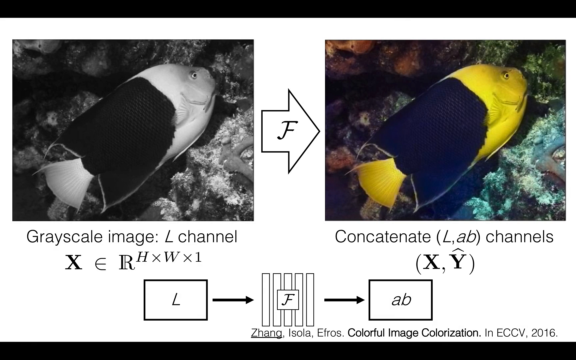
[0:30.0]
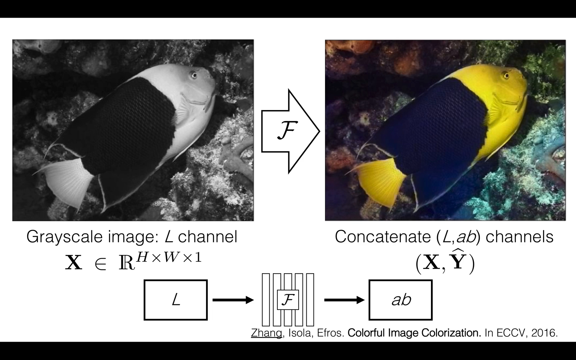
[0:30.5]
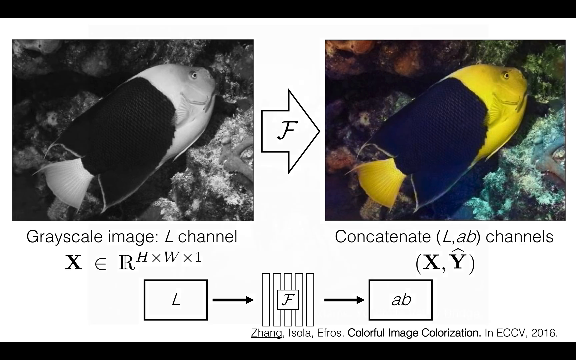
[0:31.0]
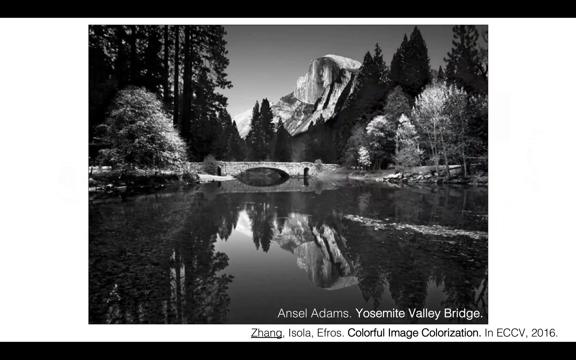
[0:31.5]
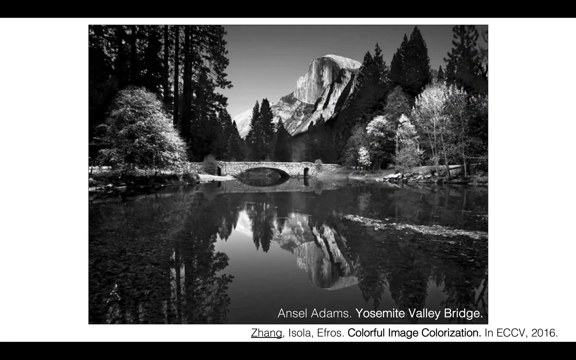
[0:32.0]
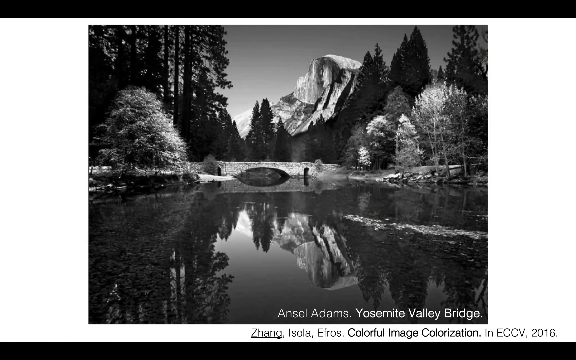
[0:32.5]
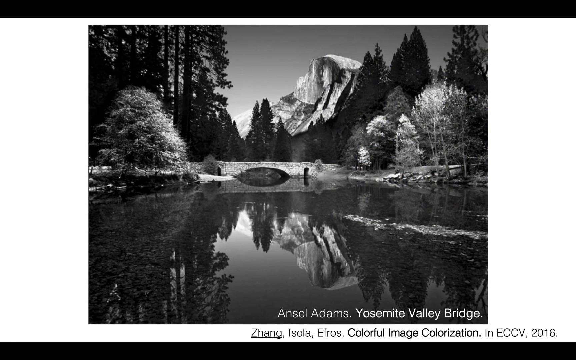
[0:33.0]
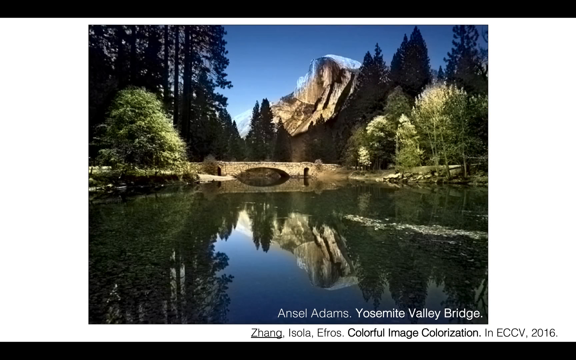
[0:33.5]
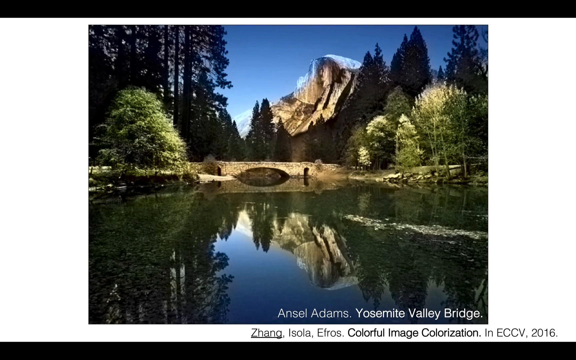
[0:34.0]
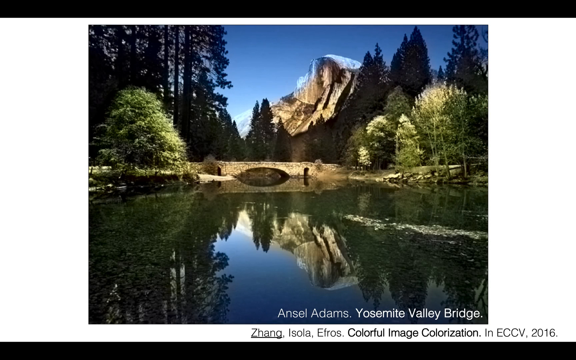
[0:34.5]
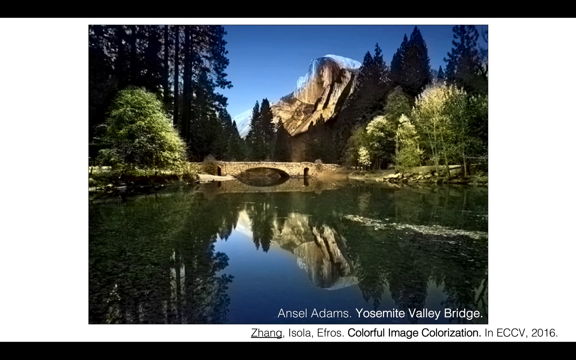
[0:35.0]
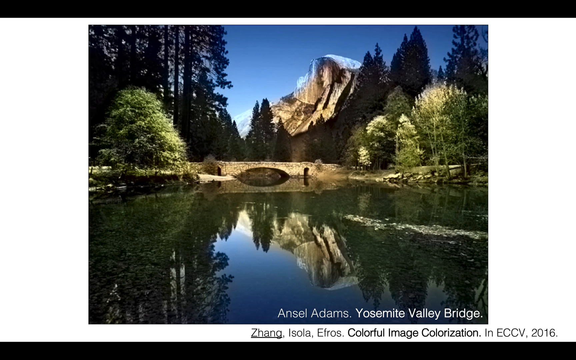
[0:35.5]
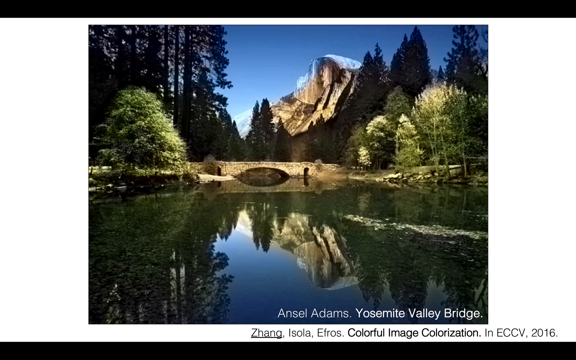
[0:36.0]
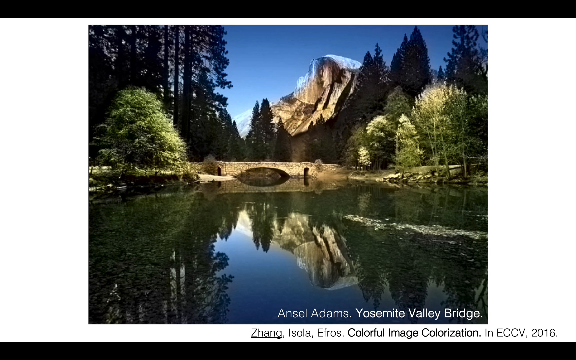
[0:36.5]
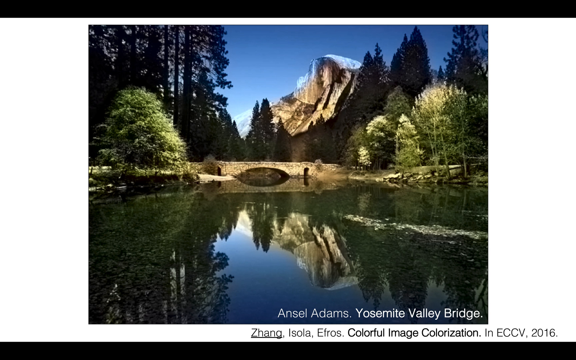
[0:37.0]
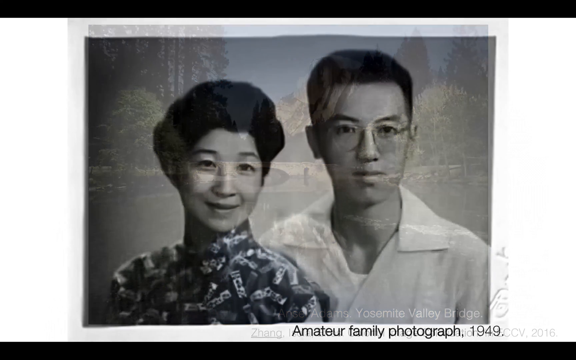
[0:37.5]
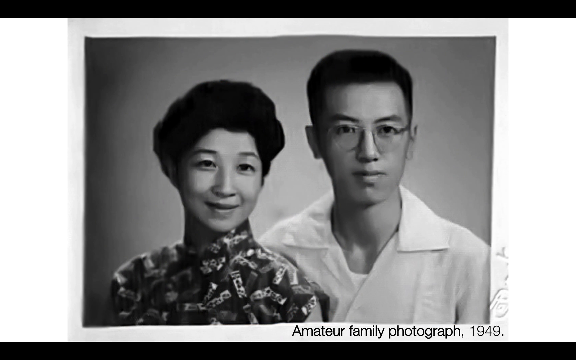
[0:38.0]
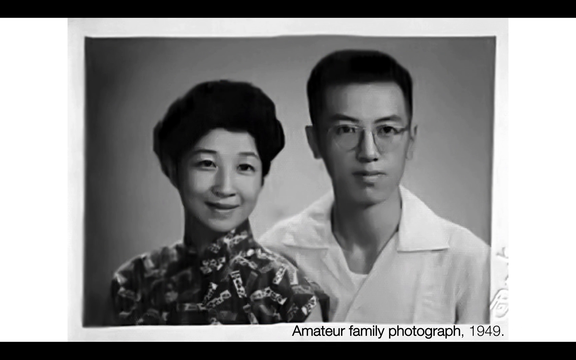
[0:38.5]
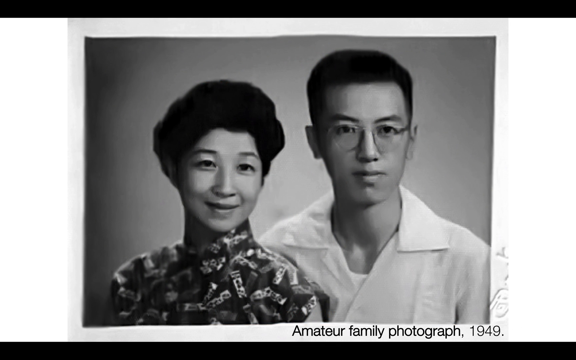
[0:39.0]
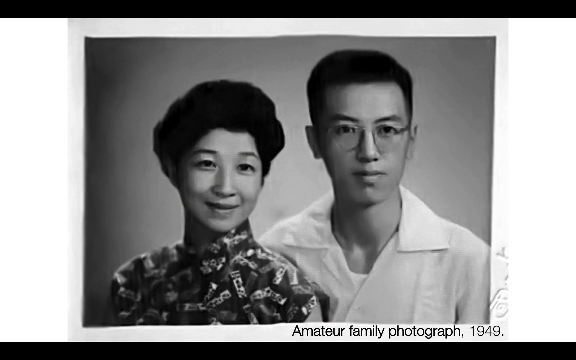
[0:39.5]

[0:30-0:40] On the left, in a square box, is the black-and-white fish image, and in a square box on the right is the same fish, now with a yellow tail fin, a yellow head area and black on its side. The scene then changes to a large square image with the text "Ansel Adams, Yosemite Valley Bridge" at its bottom right. It is a nature scene with mountains in the background and dark trees; closer to the camera, a large body of water reflects the large trees, and there is a bridge in the middle. The whole image is in black and white. The image then changes to color, with a lot of green on the trees, a very bright blue sky, and a more brownish bridge and mountain in the background.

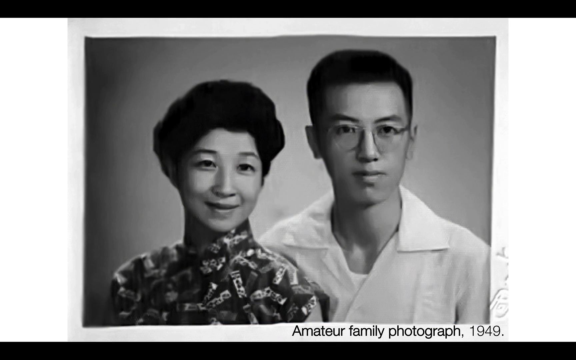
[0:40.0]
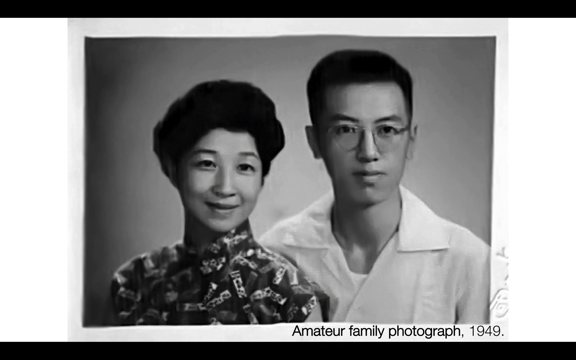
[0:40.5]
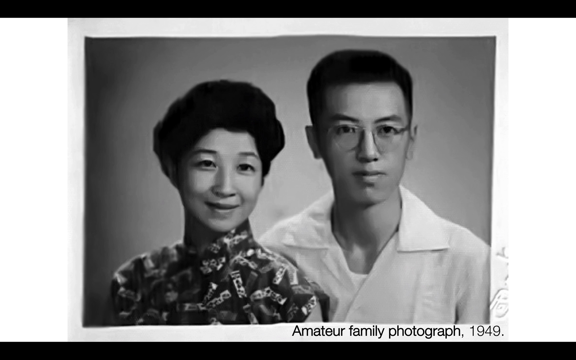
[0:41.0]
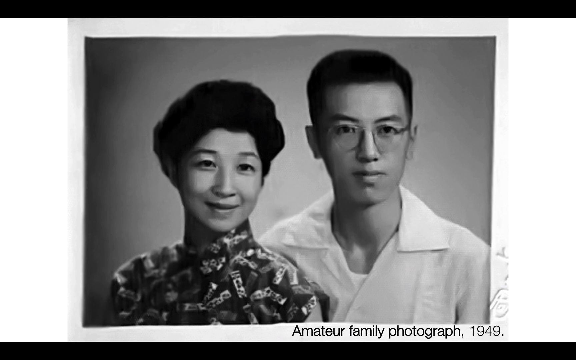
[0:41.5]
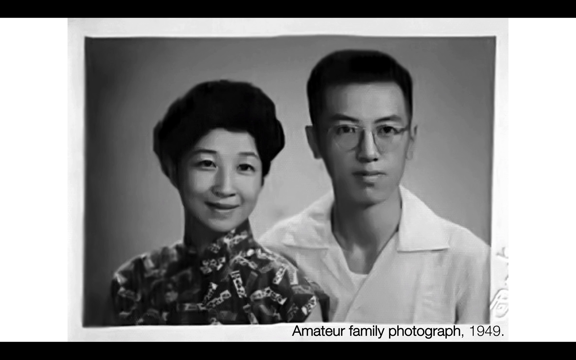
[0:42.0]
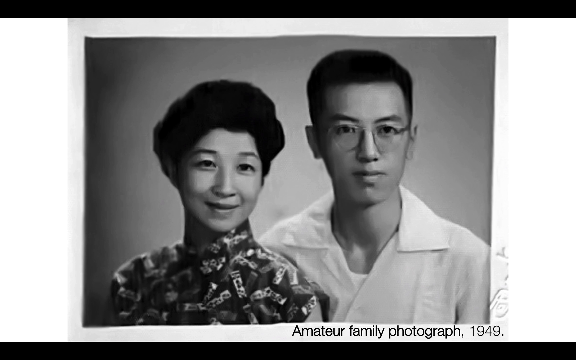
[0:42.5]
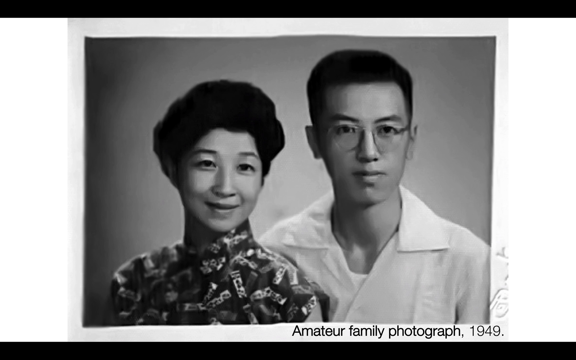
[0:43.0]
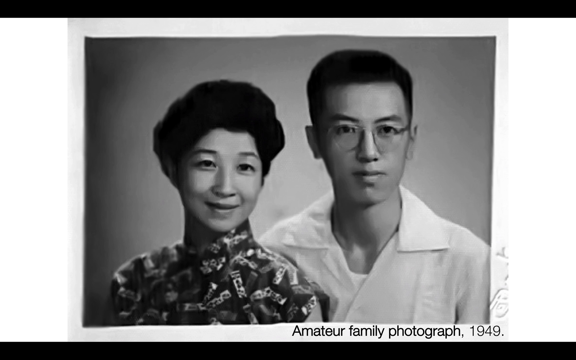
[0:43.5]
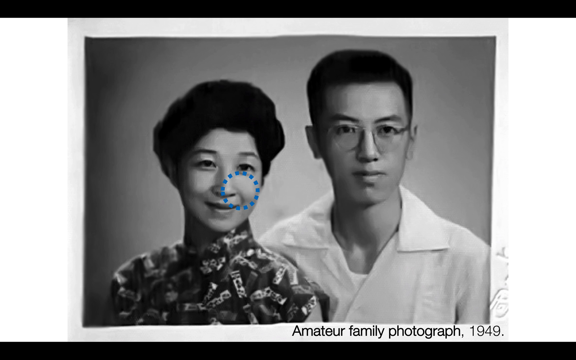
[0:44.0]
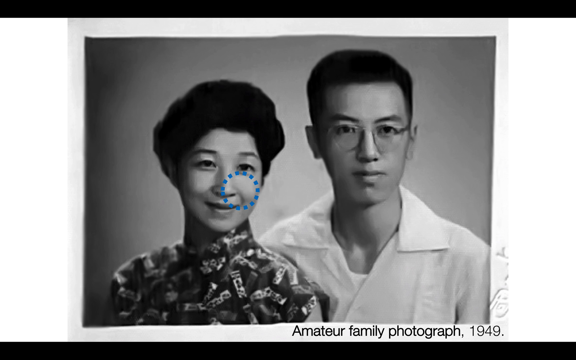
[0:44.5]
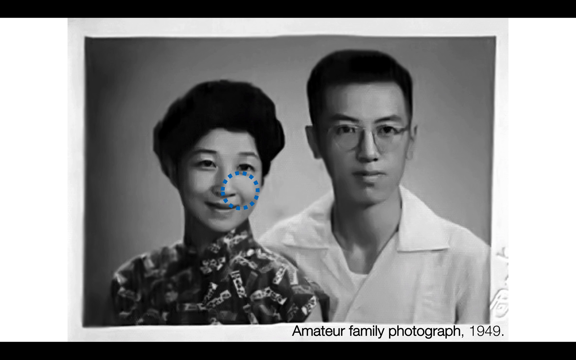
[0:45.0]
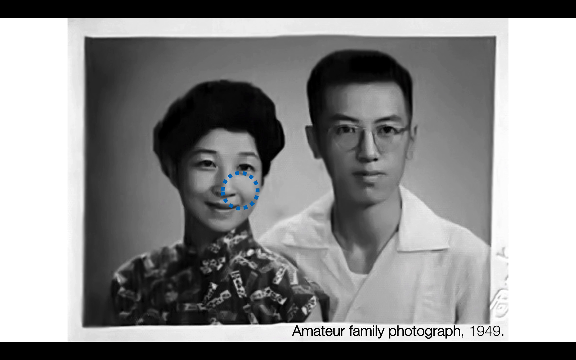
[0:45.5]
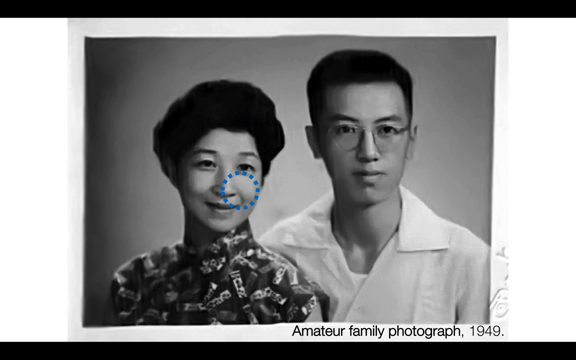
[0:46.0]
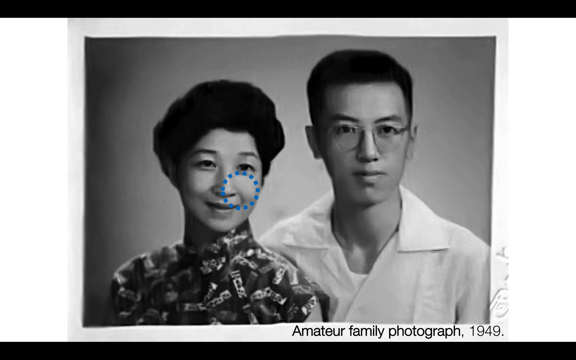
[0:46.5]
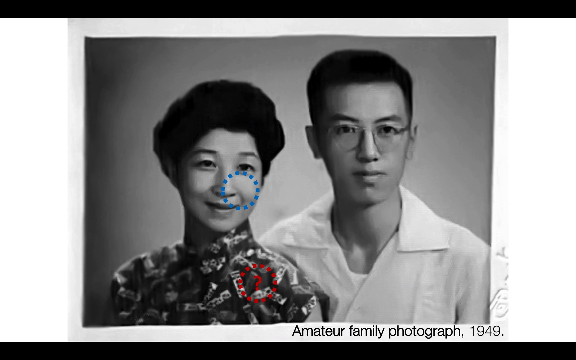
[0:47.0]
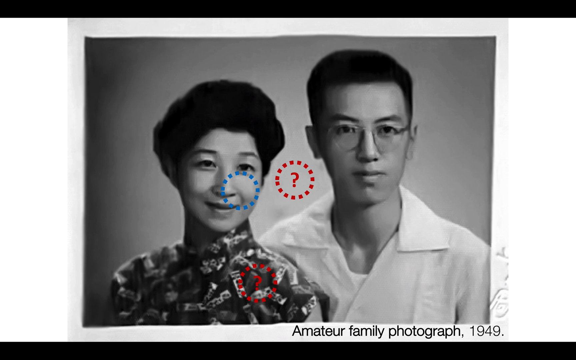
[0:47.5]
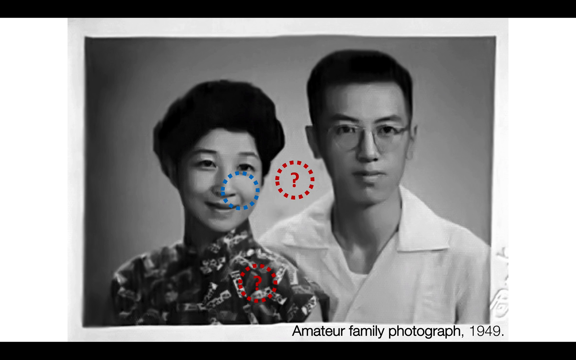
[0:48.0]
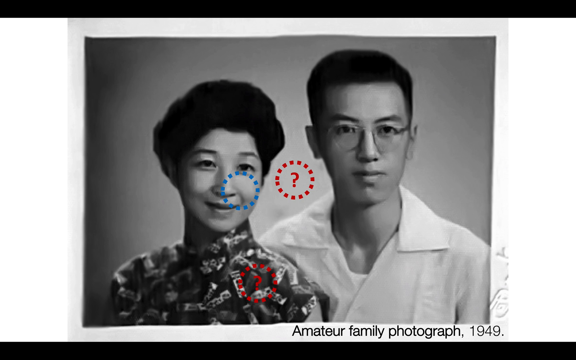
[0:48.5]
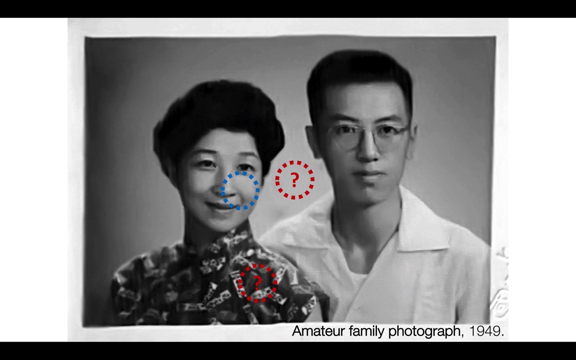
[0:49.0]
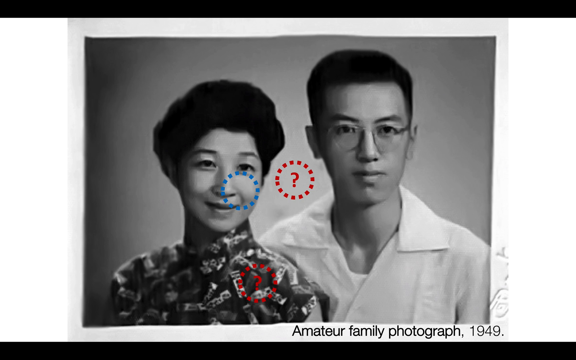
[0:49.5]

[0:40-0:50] An image shows a man on the right and a woman on the left, both of Asian descent. The man appears to be wearing glasses and has a white collared shirt and short black hair. The woman also has black hair, medium length and going upwards, and her outfit is a mix of white and black. At the bottom right, in black text beneath the photo, is "amateur family photograph, 1949." The image holds. A sort of blue circle appears around the woman's left cheek; the circle has gaps along its shape that form little blue squares. Another such circle, red this time, appears on the woman's left collarbone with a question mark in the middle, and another with the same question mark appears between the woman and the man.